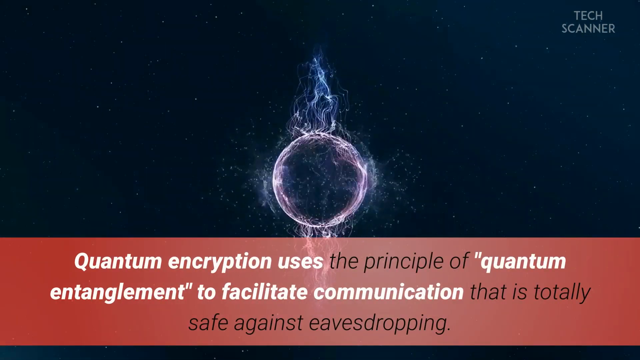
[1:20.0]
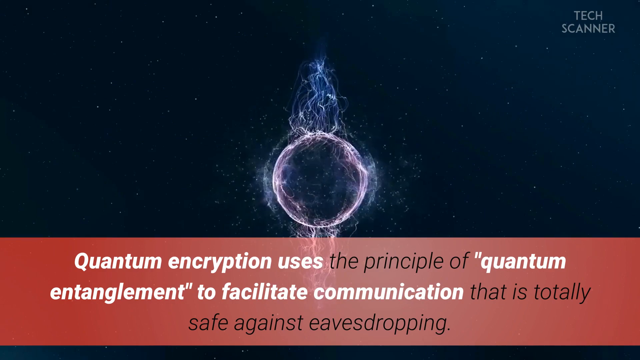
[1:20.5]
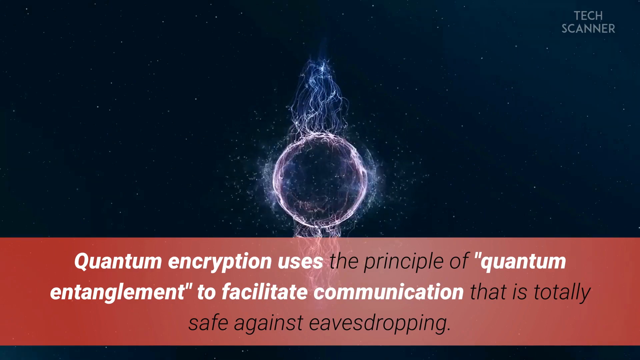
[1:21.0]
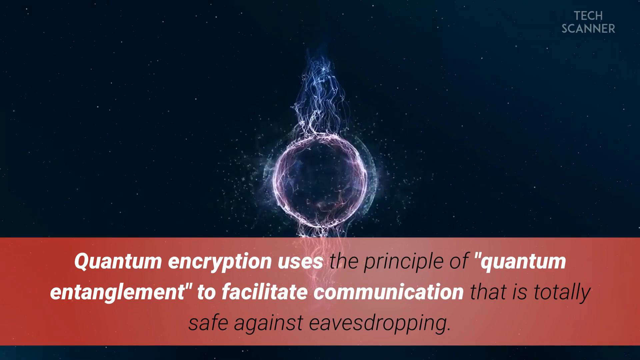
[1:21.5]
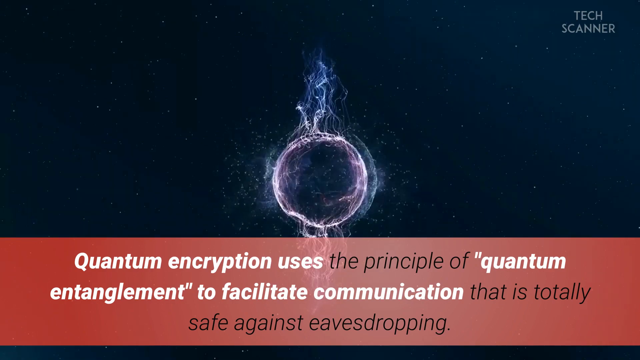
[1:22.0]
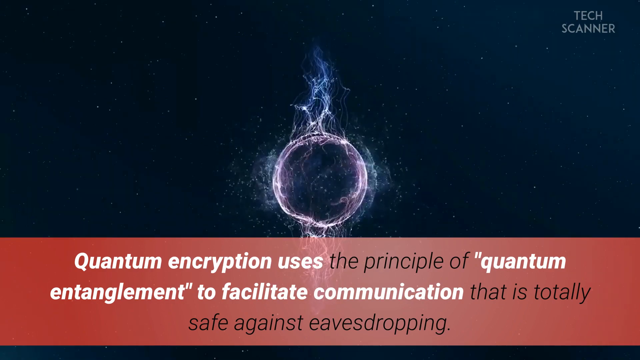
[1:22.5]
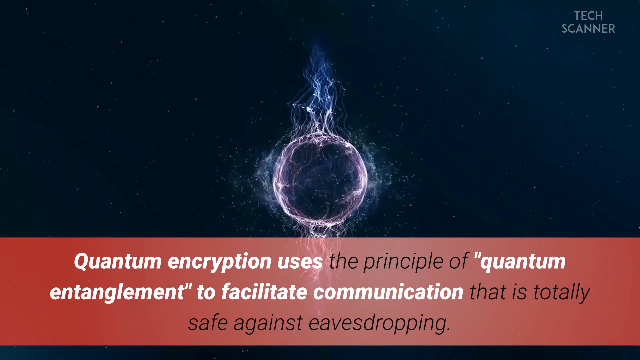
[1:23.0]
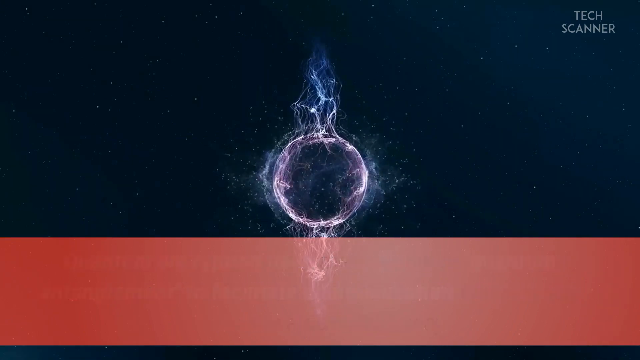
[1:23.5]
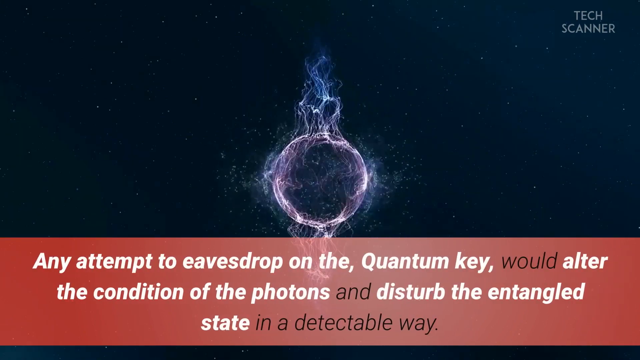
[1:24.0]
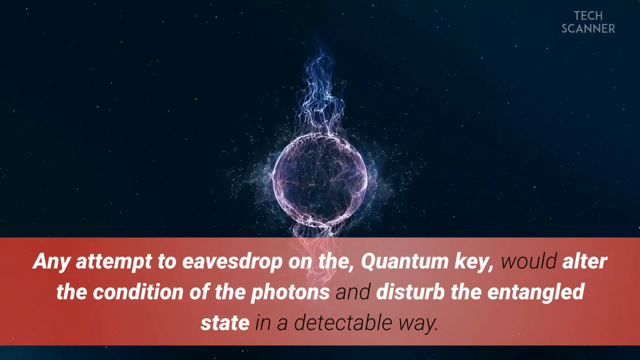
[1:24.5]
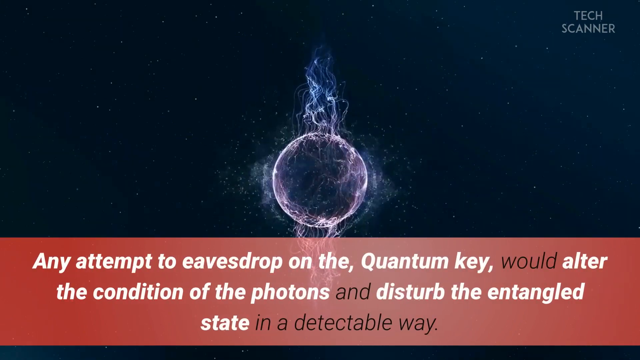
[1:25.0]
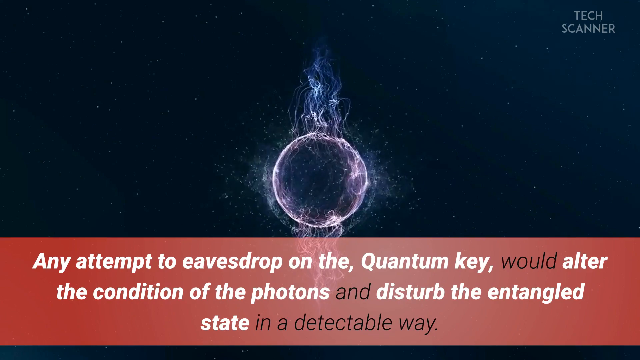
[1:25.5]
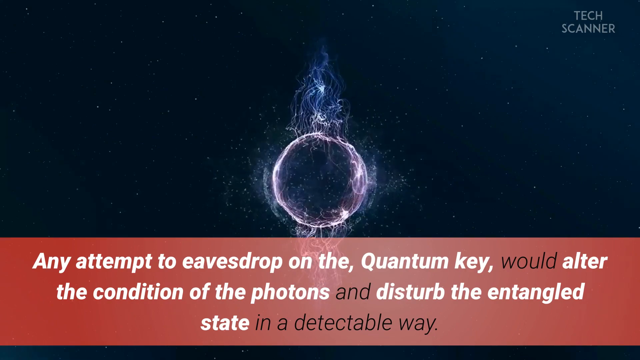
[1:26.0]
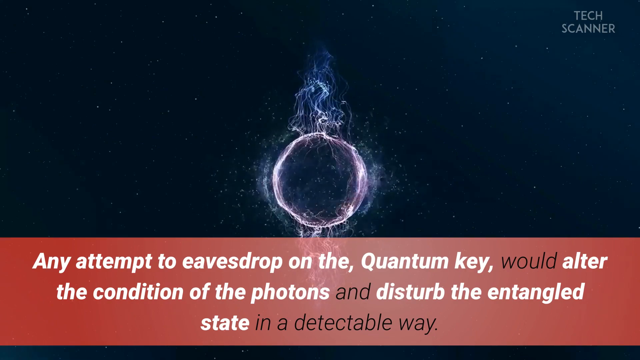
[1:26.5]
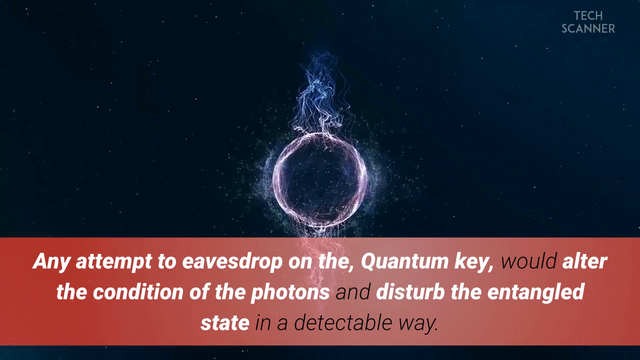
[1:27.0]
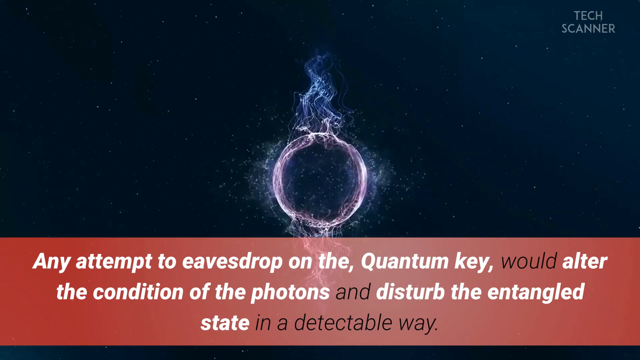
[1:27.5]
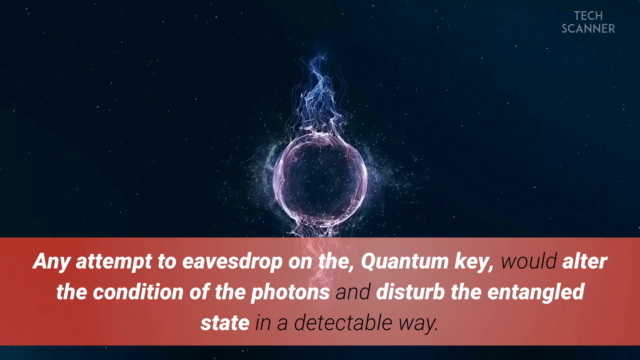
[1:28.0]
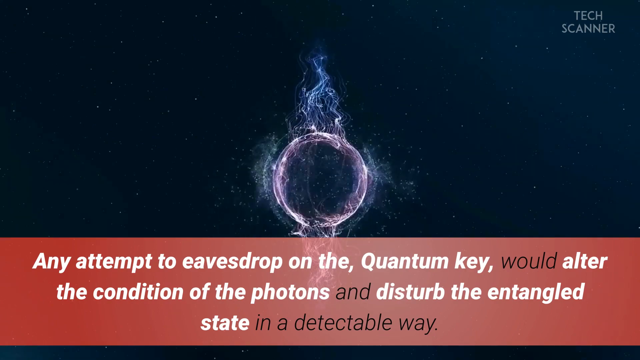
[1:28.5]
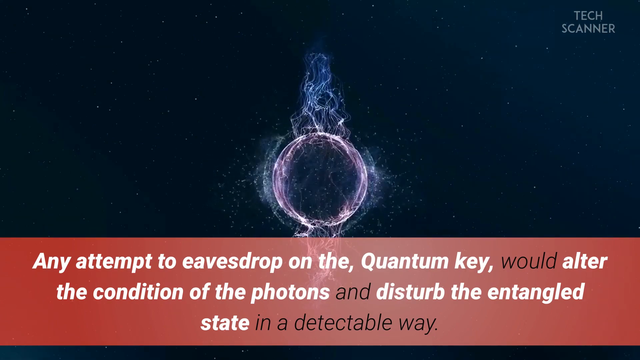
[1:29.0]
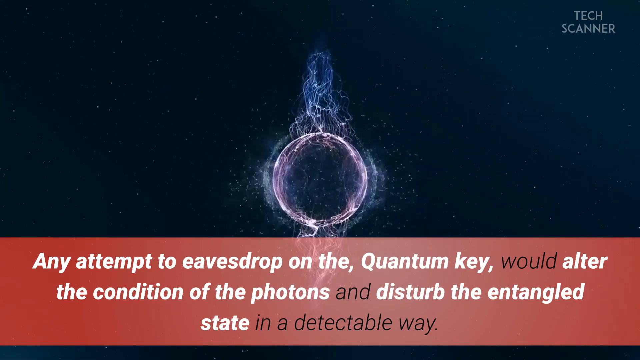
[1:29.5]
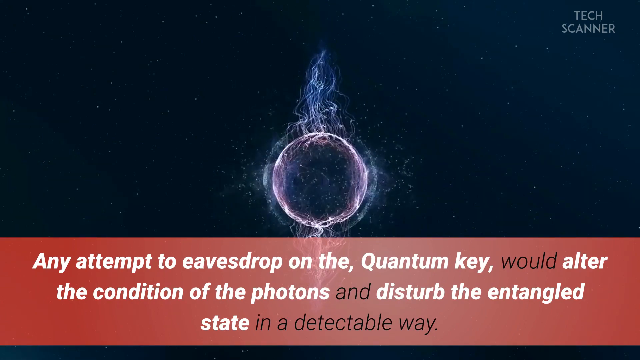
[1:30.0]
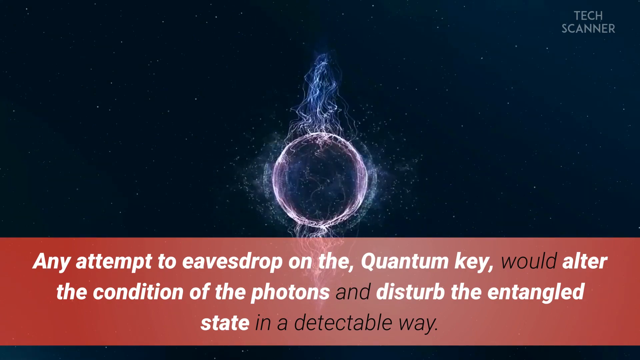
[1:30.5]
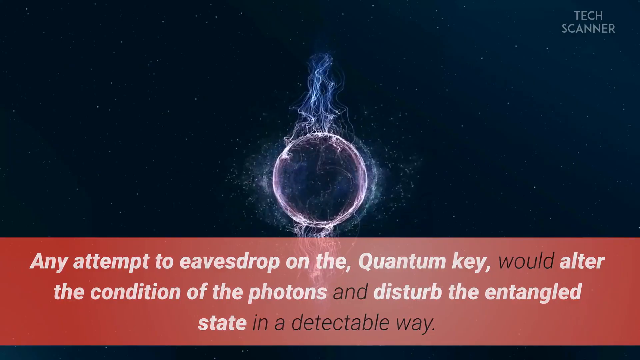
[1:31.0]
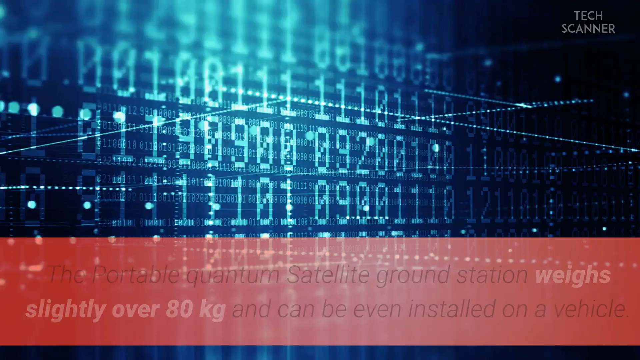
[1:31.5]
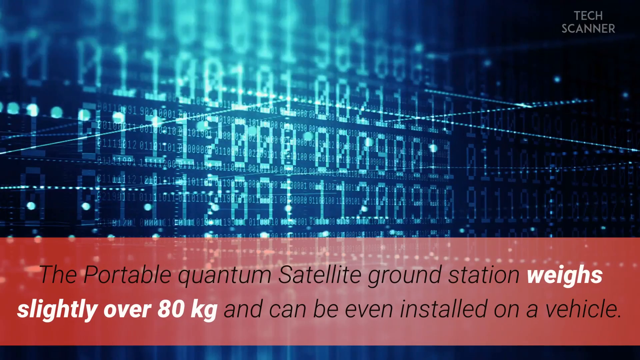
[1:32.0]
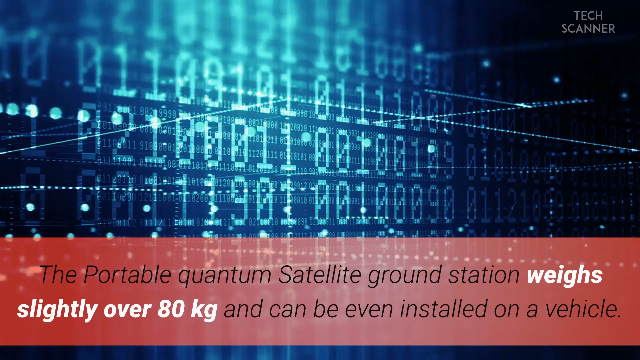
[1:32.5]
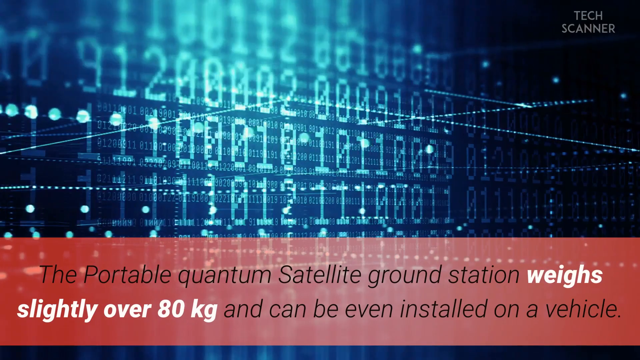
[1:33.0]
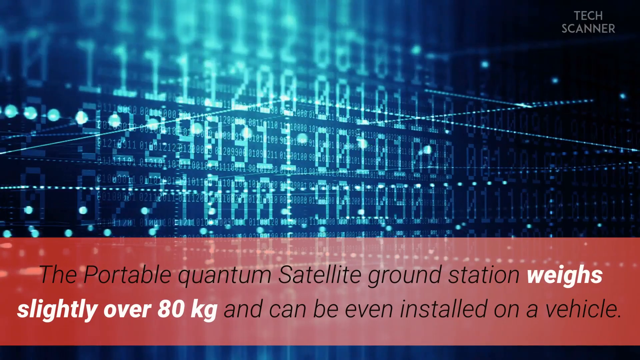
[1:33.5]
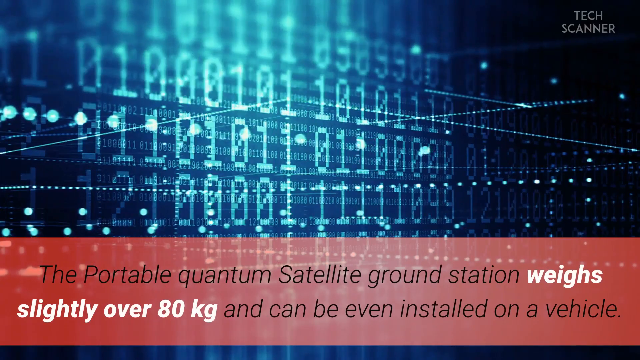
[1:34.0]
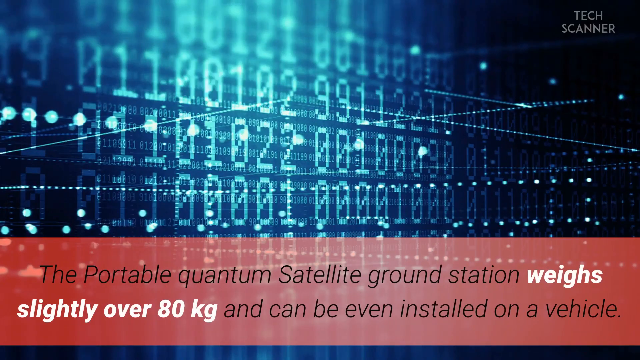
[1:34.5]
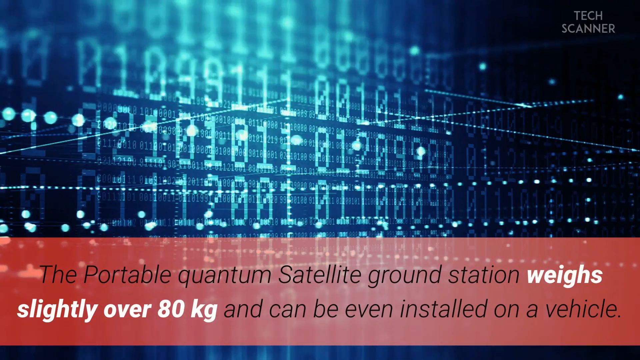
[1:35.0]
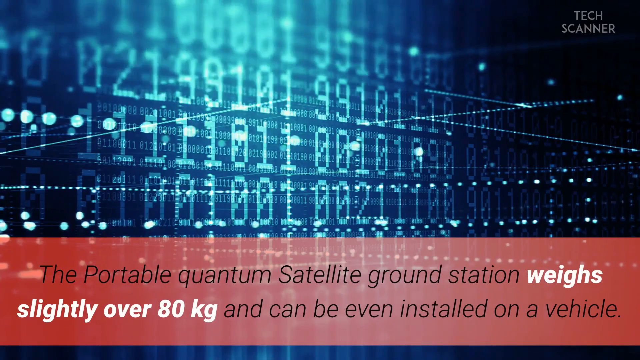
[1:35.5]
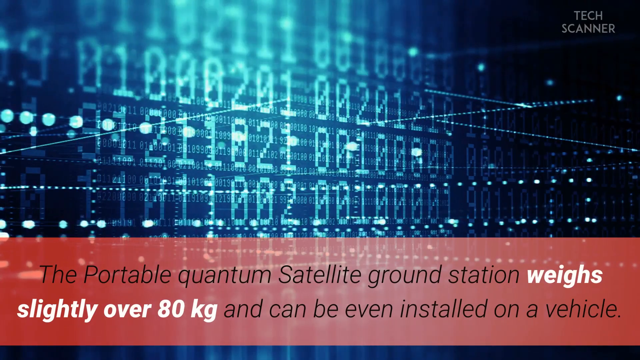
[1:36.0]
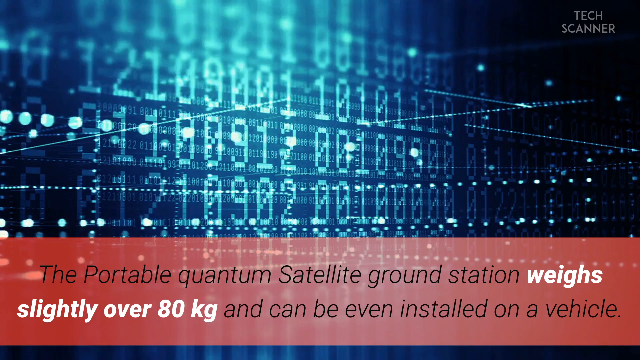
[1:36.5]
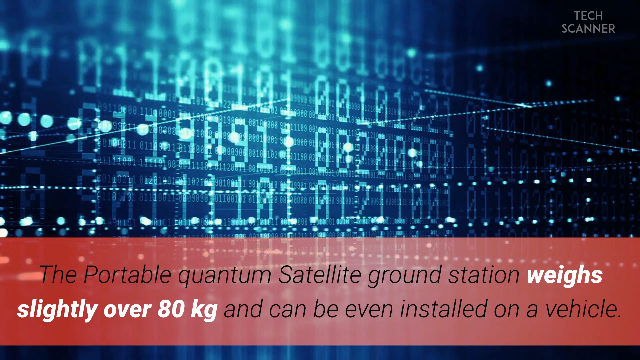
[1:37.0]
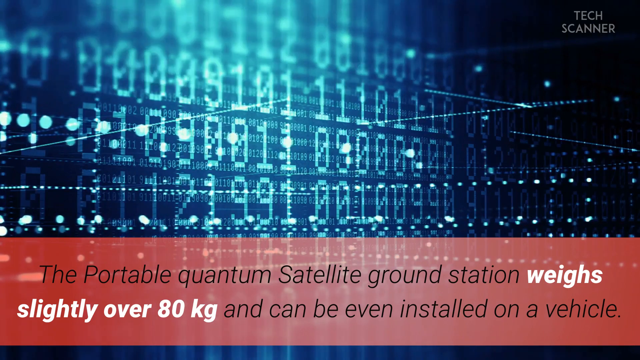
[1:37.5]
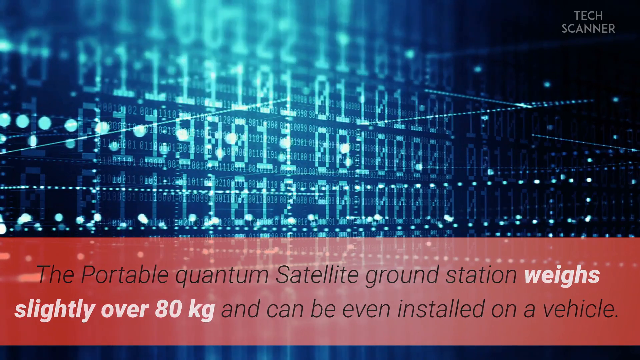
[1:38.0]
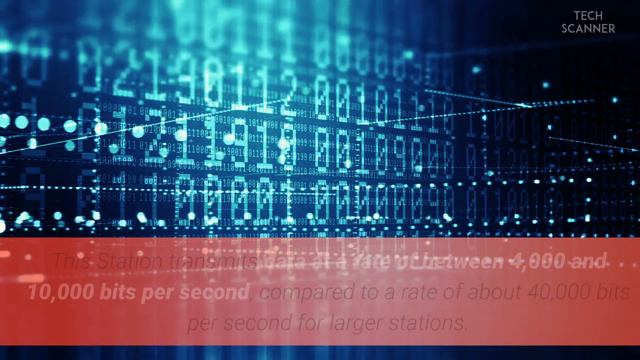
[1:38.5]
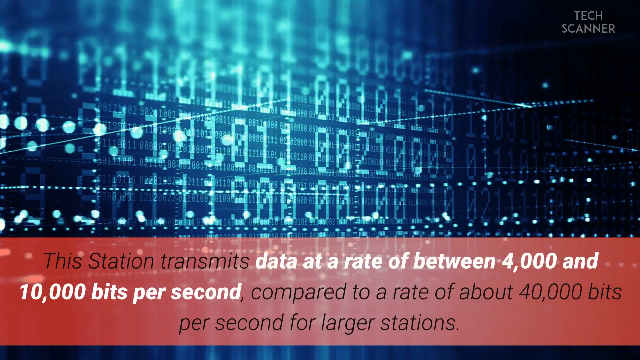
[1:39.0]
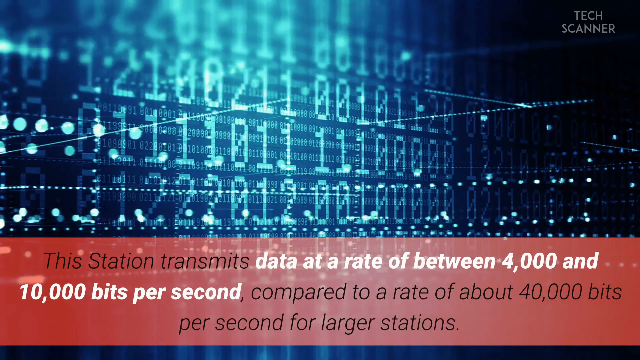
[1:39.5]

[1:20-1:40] The text still says "quantum encryption" as the purple ball moves, and the red box reads "any attempt to eavesdrop on the quantum key would alter the condition of the photon," disturbing its state in a detectable way. The background then changes to a board of numbers lit up with a neon-like light, flashing and changing rapidly. The red box at the bottom reads "the portable quantum satellite ground station weighs slightly over 80 kilograms," in black lettering except for "weighs slightly over 80 kilograms," which is in white. The background numbers keep changing rapidly; they are not binary code of only ones and zeros but all kinds of different numbers.